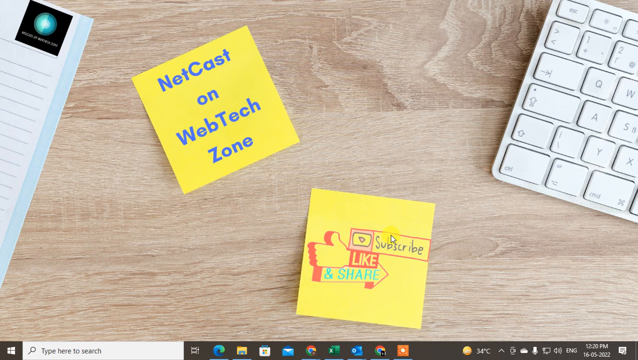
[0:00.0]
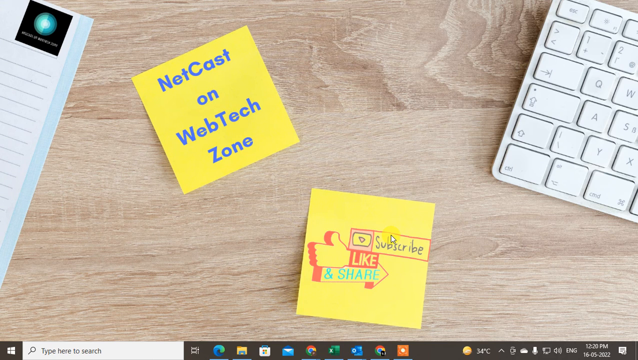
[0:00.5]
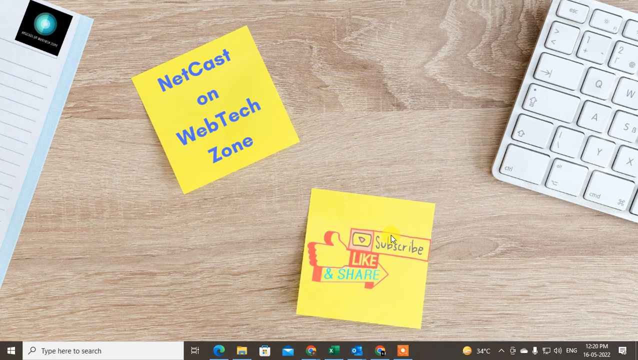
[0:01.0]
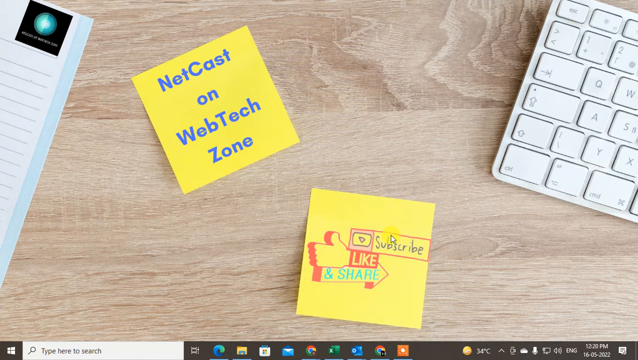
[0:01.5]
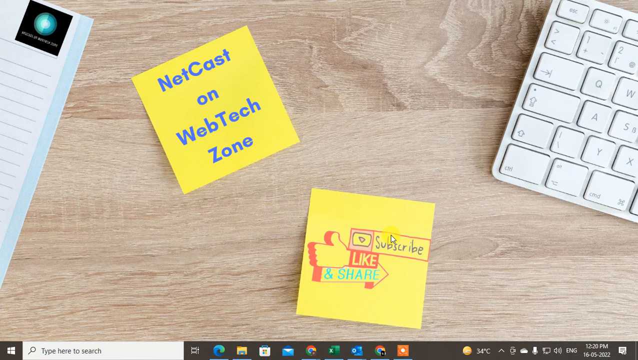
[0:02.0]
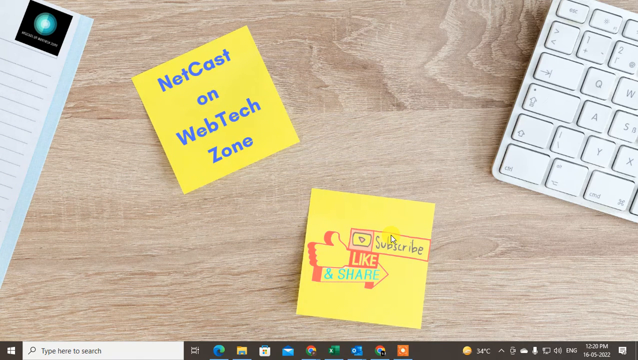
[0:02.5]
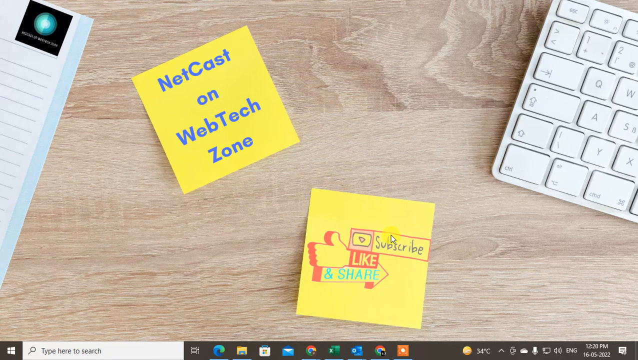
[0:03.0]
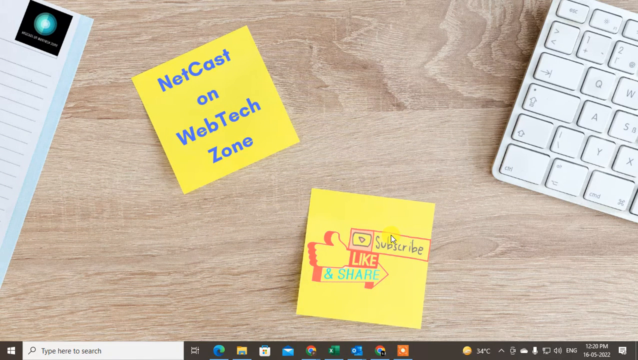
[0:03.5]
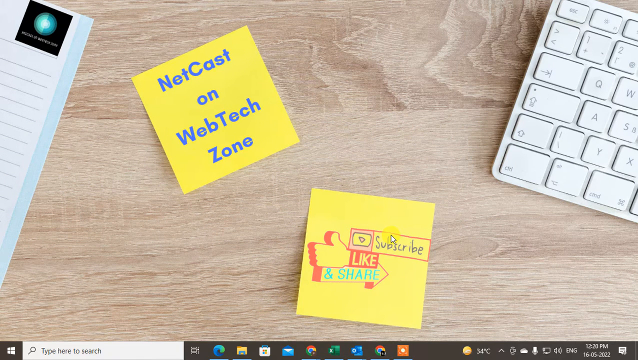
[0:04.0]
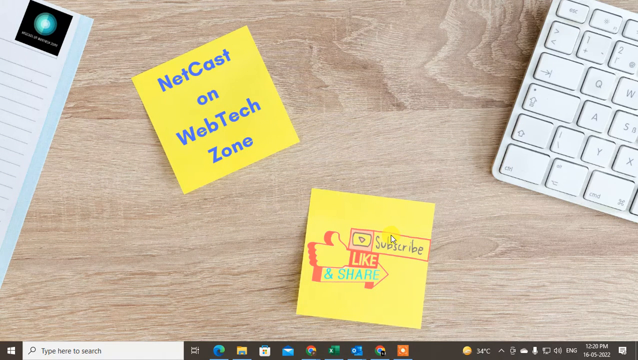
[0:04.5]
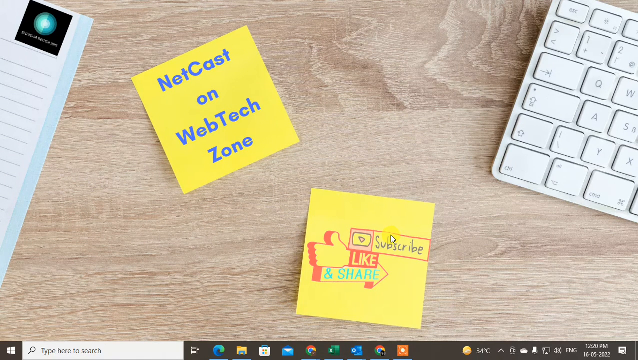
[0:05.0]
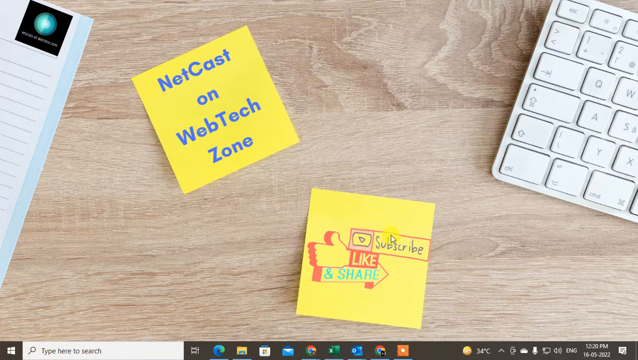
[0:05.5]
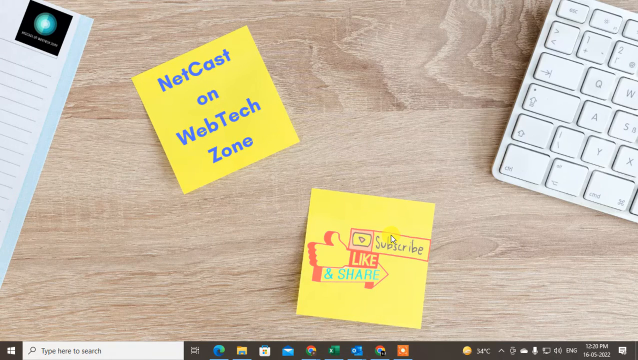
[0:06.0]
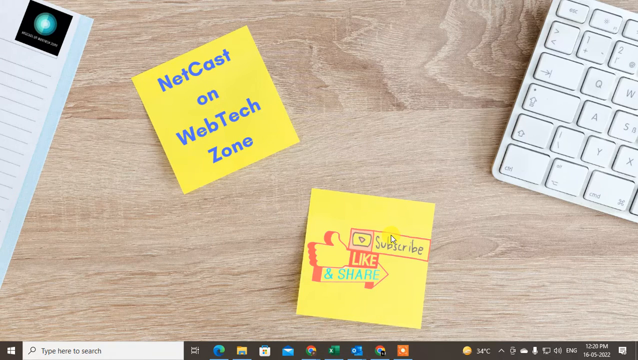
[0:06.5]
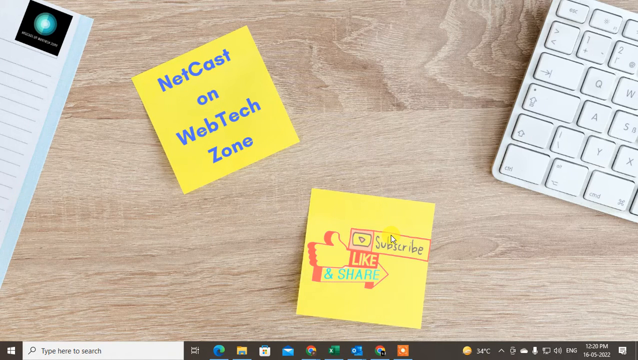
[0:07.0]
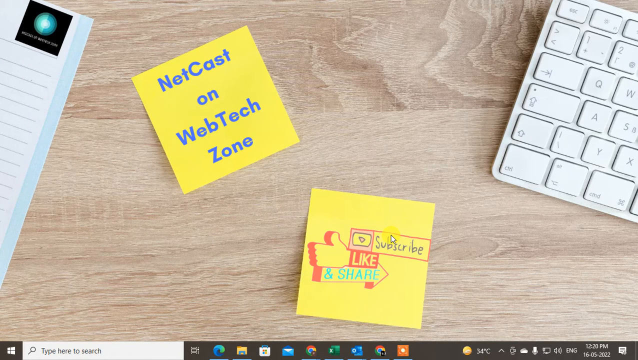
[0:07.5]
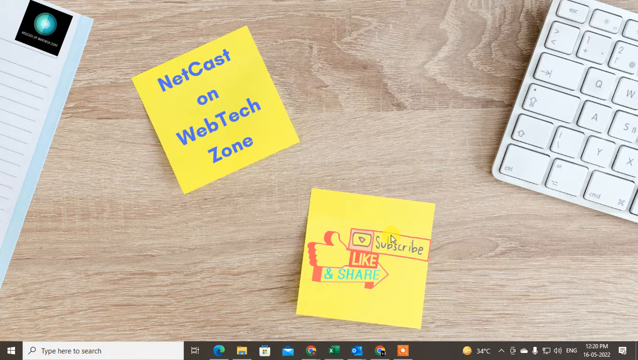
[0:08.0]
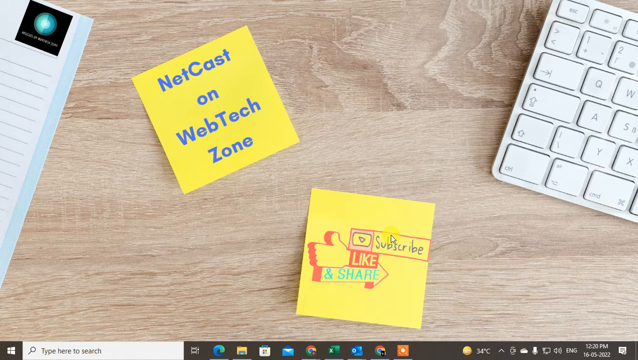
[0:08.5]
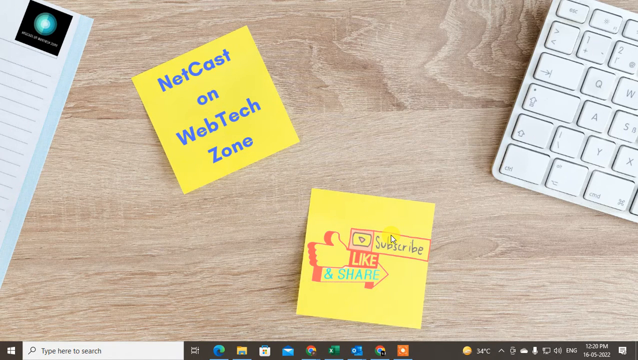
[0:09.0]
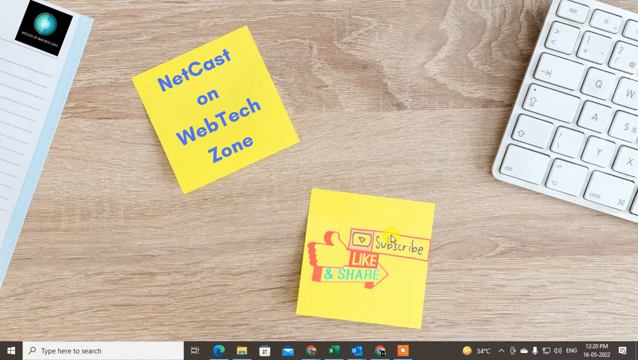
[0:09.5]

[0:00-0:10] A top-down view shows a wooden table with a notepad off to the far left, a white, slim-style keyboard on the far right, and two sticky notes in the center. One of them says "NetCast on WebTech Zone", and underneath that are the words "subscribe", "like" and "share". The picture is mostly full screen, but the user's desktop can be seen at the very bottom of the image; judging by its look and the styling of the icons, it appears to be a Windows 10 configuration.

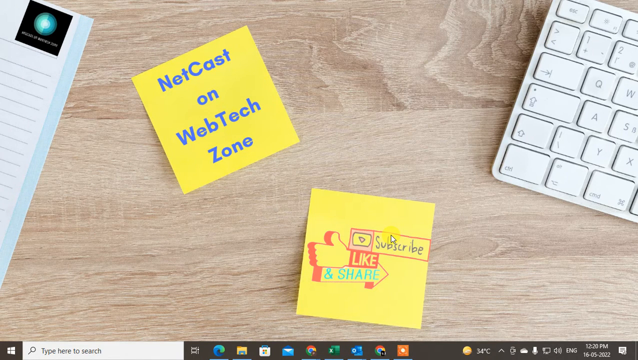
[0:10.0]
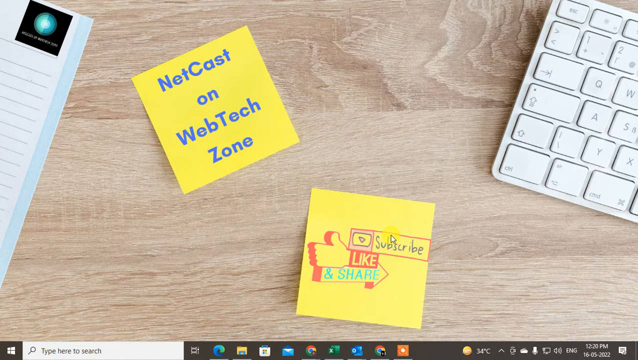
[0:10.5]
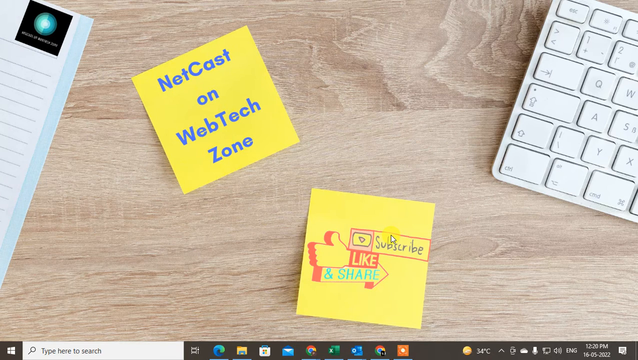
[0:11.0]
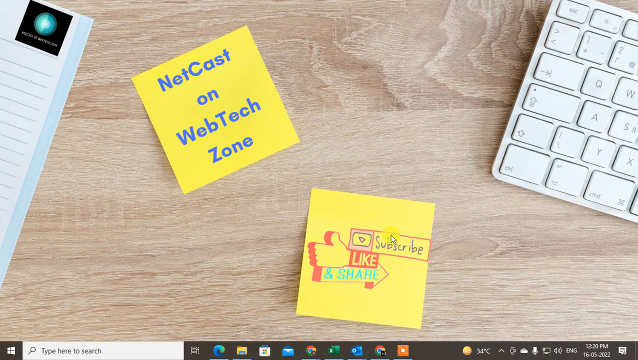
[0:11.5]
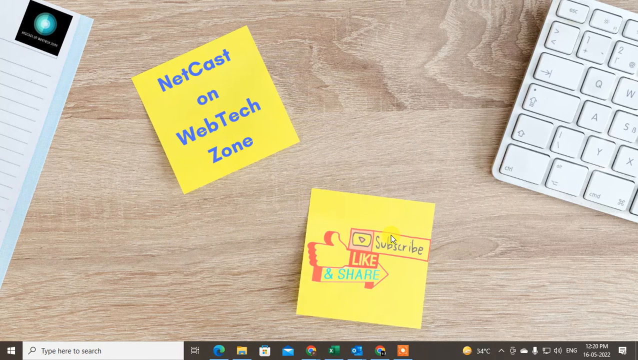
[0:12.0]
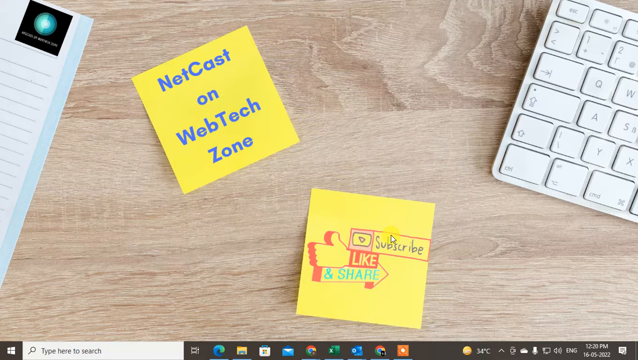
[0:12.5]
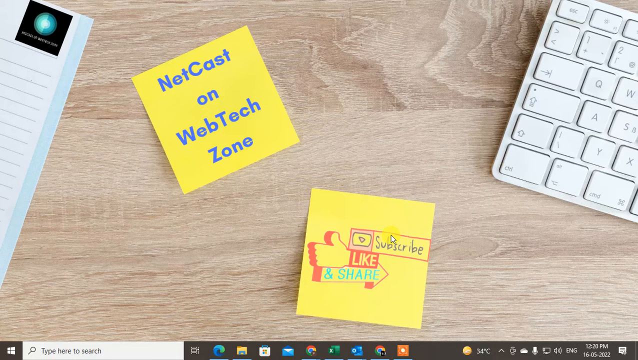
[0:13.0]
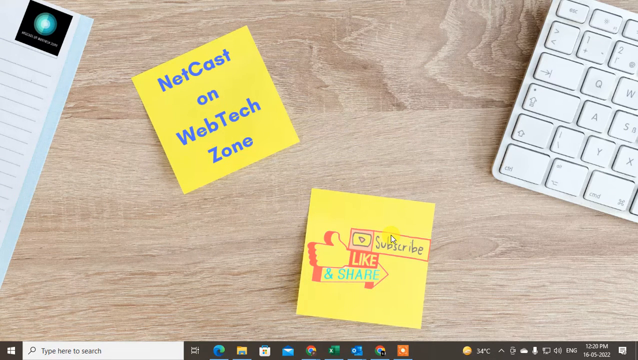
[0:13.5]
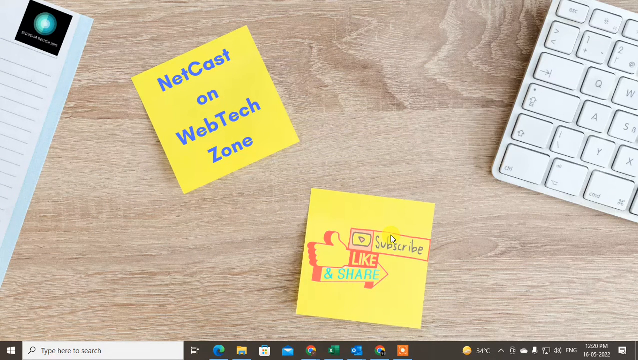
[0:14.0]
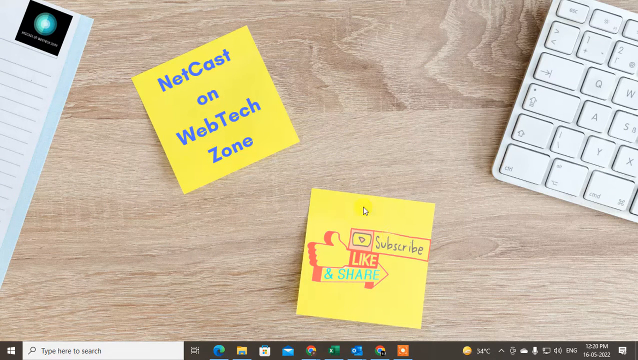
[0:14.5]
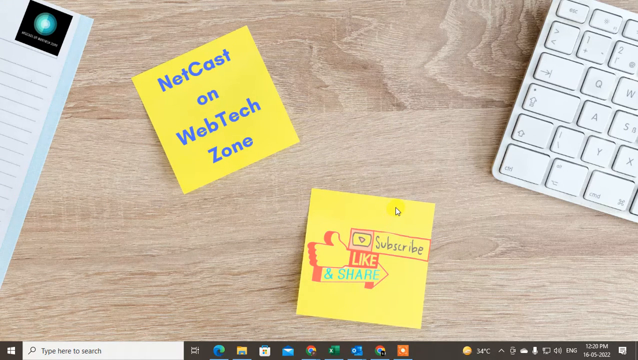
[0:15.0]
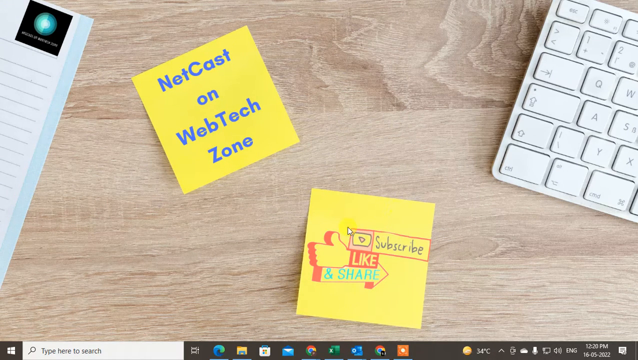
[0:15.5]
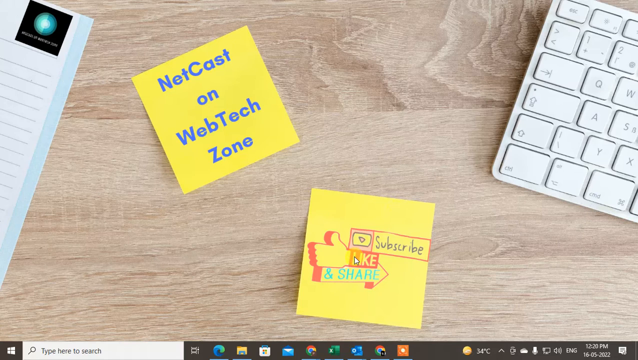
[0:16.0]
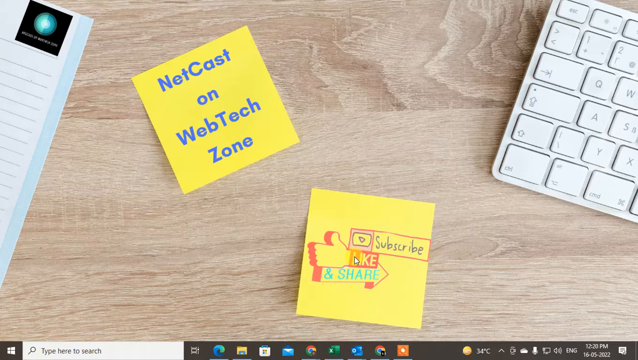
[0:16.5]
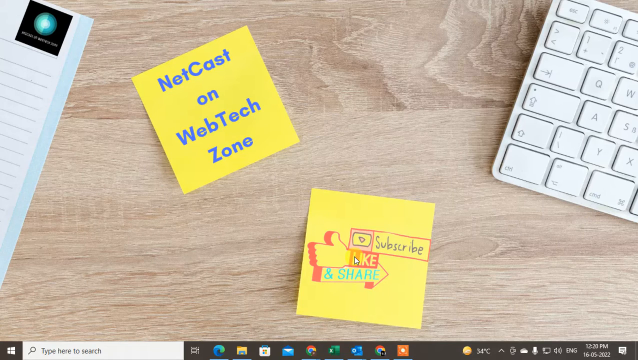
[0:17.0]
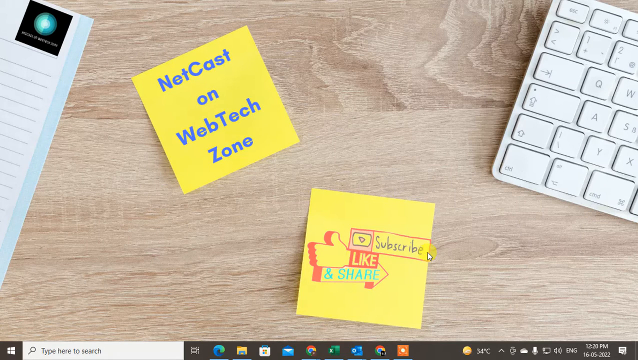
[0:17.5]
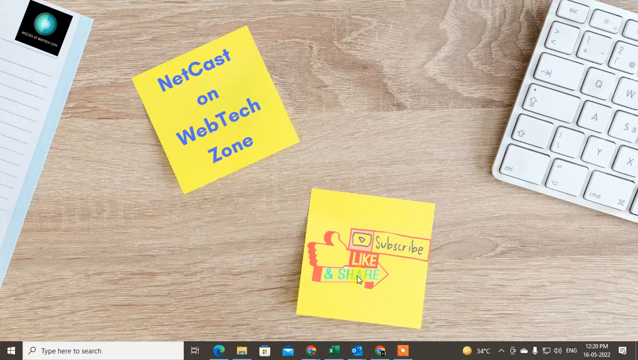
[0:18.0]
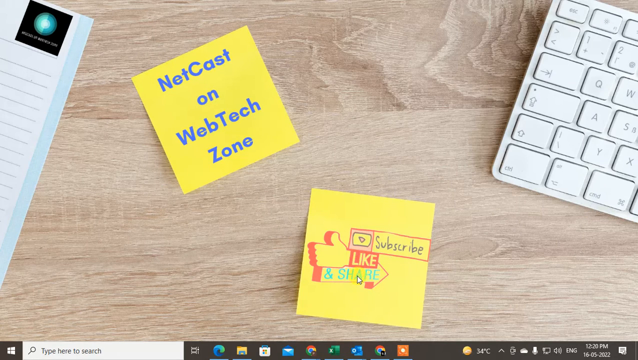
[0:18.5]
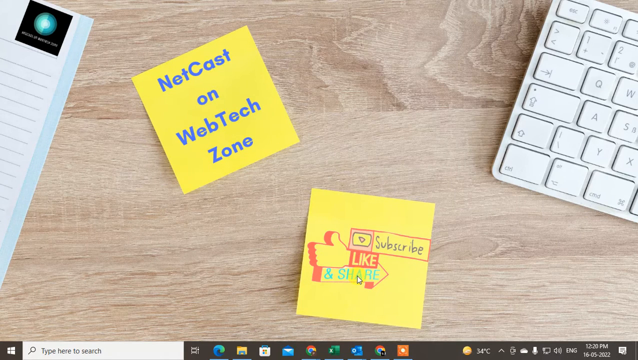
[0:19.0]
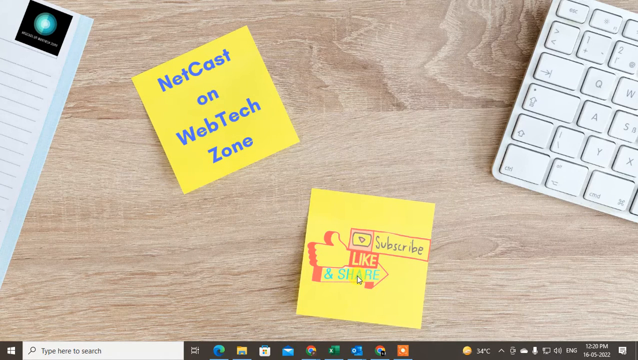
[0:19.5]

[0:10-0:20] The same table scene continues, but now the user's mouse cursor can be seen highlighting and moving over the second sticky note at the bottom center. The cursor ends slightly off to the far right, no longer on the sticky note.